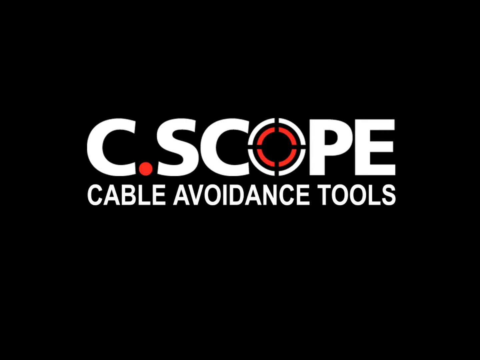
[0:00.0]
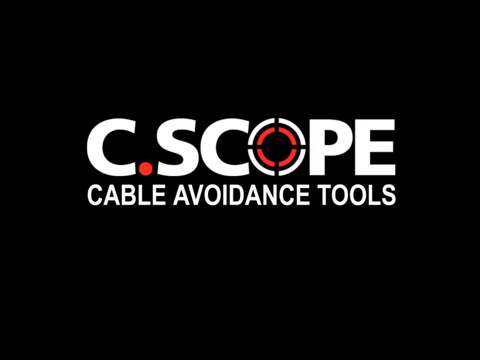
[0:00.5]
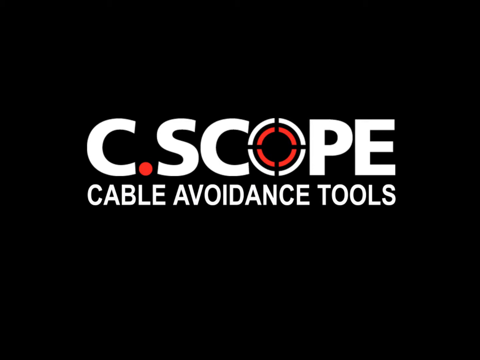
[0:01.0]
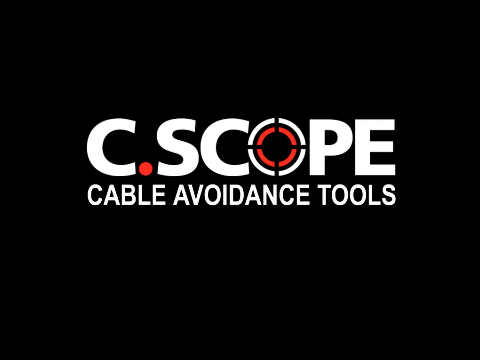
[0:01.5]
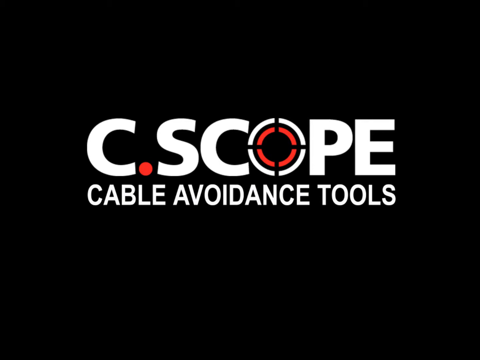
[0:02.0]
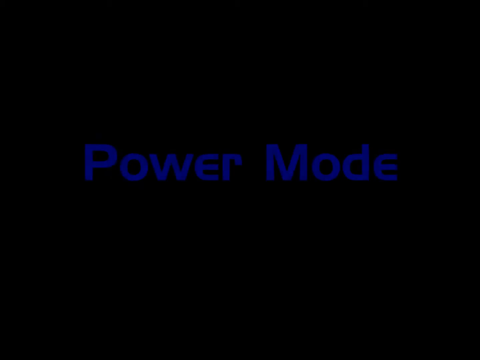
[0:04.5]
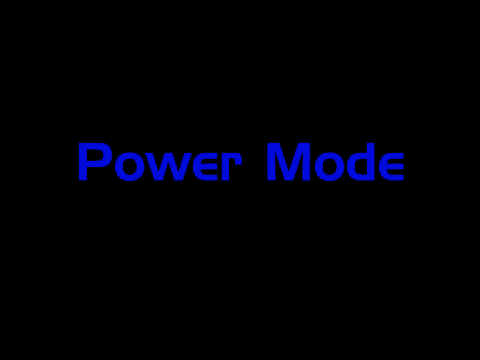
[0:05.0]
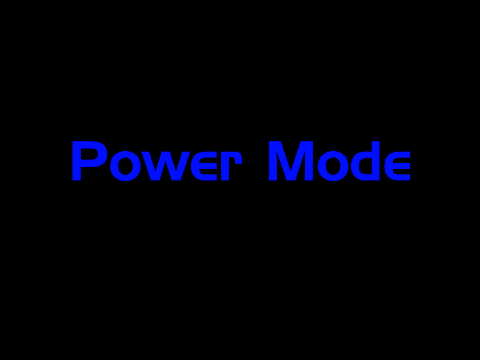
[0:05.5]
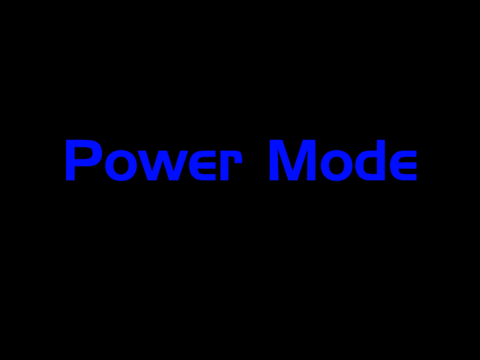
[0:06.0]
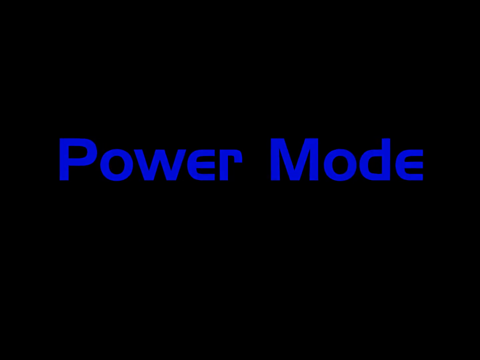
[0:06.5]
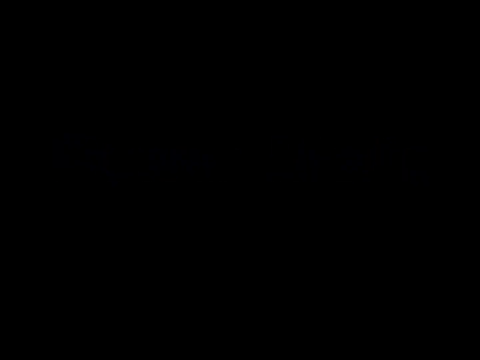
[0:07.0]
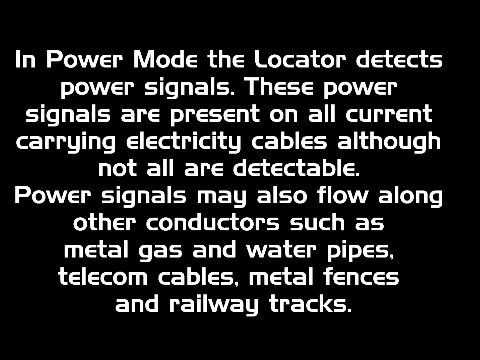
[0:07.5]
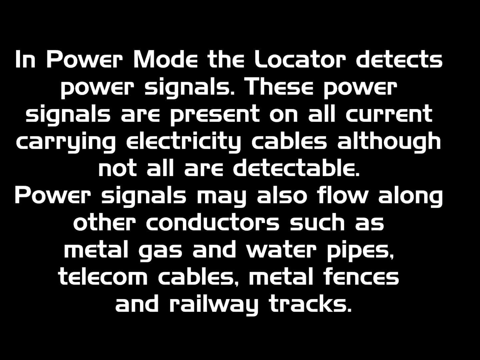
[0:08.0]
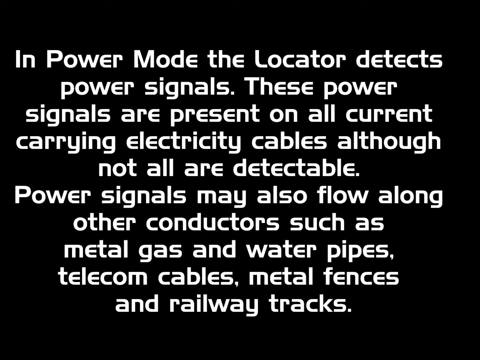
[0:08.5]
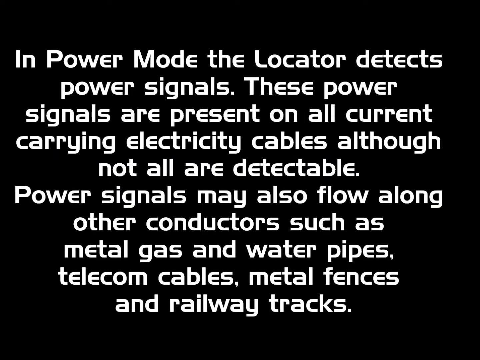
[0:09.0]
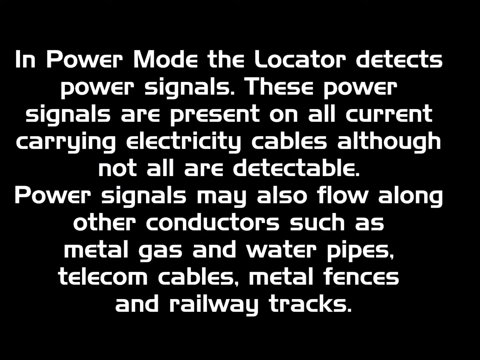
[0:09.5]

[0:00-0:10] On a black background, white text reads "C scope cable avoidance tools." Next, "power mode" appears in blue. Text then reads: "in power mode, the locator detects power signals. These power signals are present on all current carrying electricity cables, although not all are detectable. Power signals may also flow along other conductors such as metal gas and water pipes, telecom cables, metal fences and railway tracks." The C scope logo then appears: the C and "scope" are white, but the middle O of "scope" looks like a telescope in red.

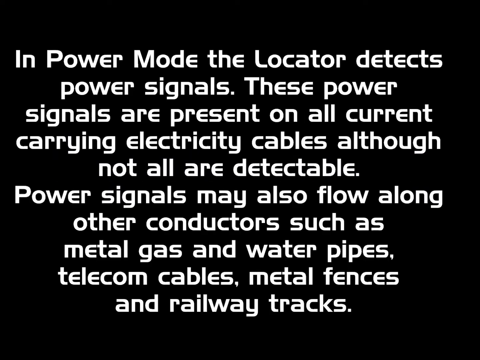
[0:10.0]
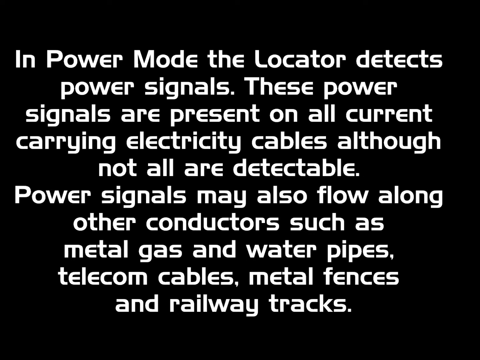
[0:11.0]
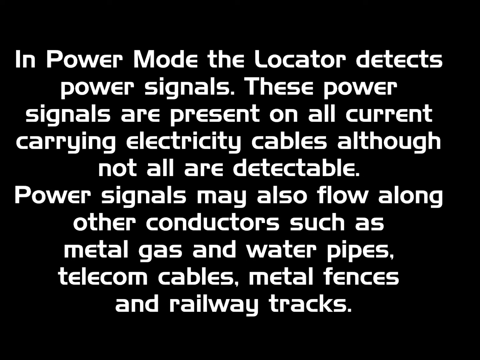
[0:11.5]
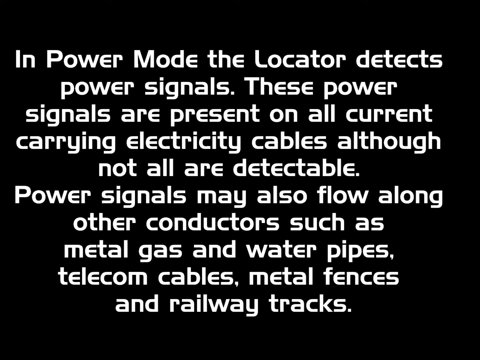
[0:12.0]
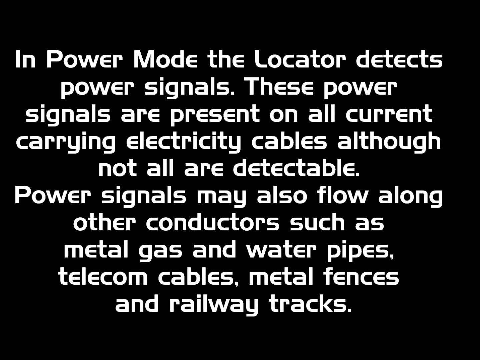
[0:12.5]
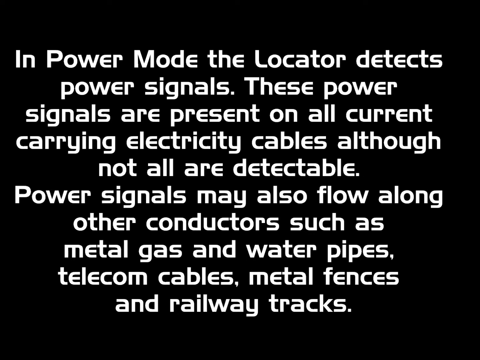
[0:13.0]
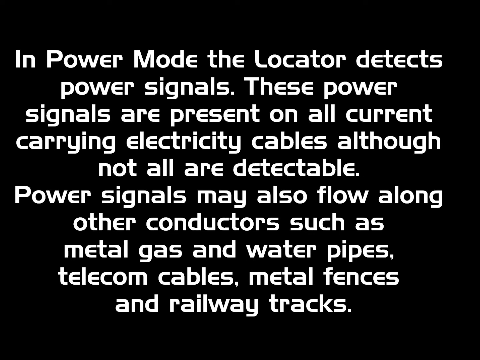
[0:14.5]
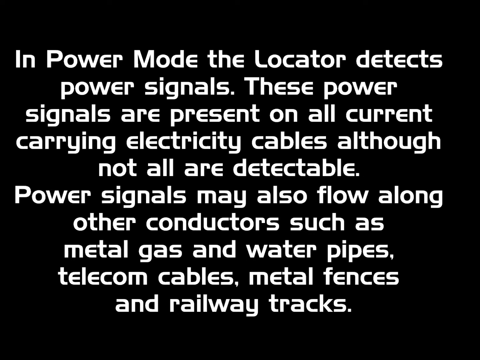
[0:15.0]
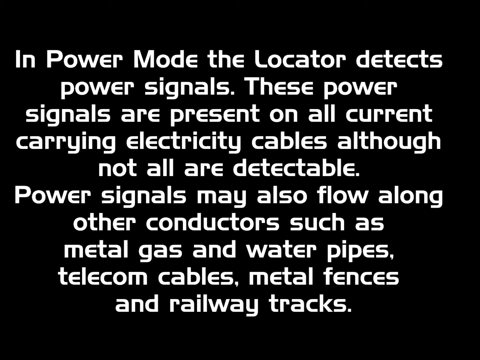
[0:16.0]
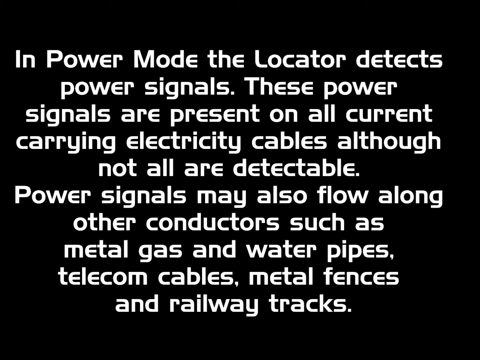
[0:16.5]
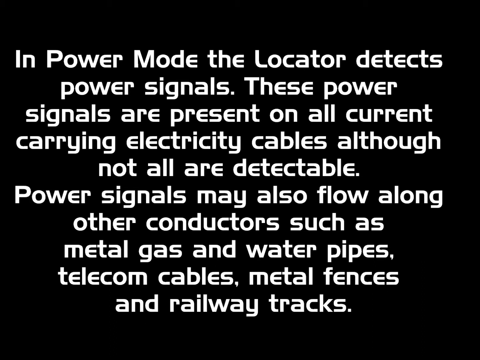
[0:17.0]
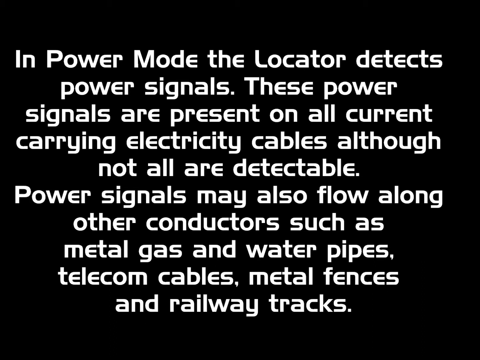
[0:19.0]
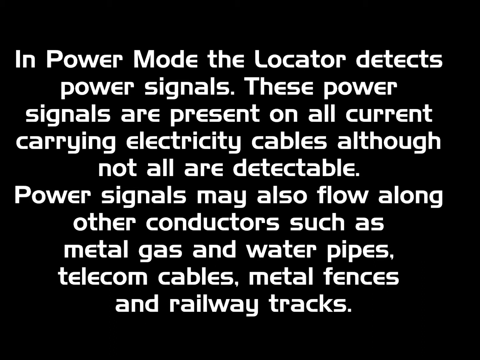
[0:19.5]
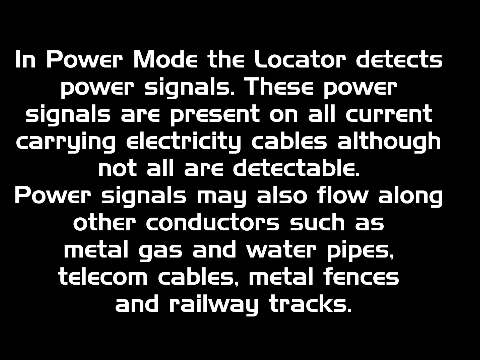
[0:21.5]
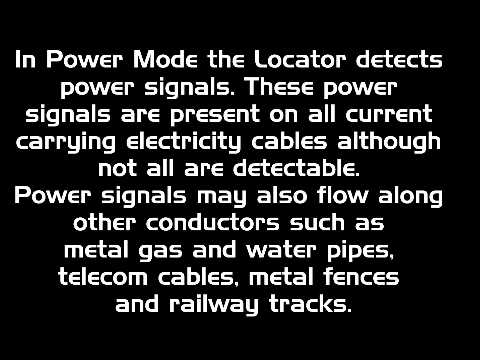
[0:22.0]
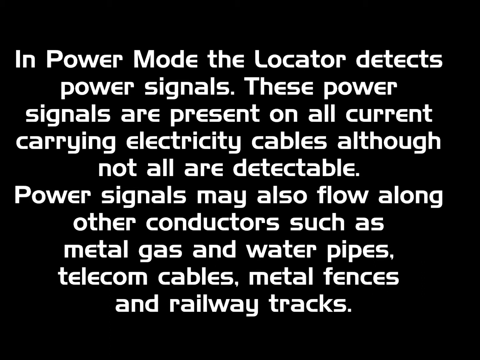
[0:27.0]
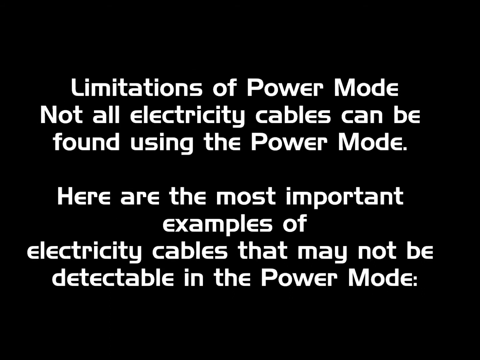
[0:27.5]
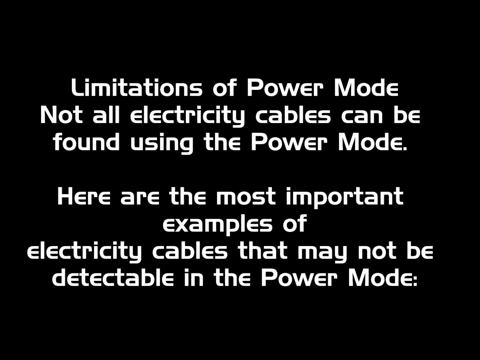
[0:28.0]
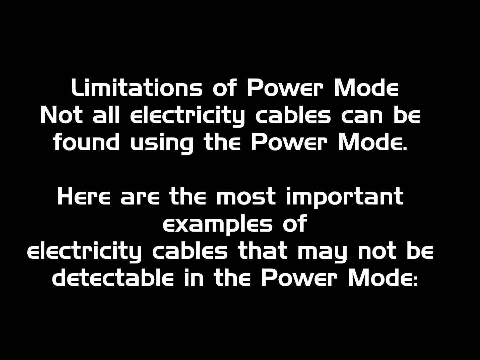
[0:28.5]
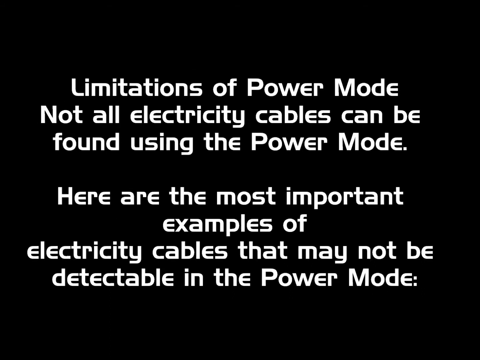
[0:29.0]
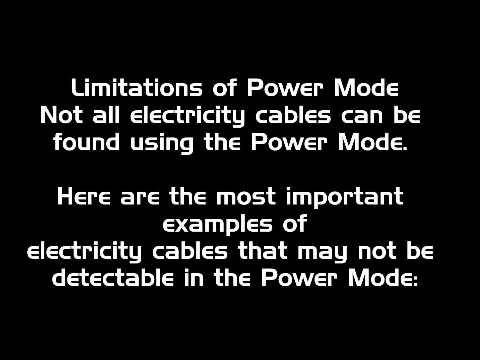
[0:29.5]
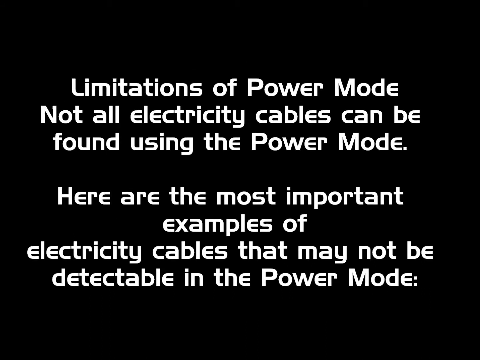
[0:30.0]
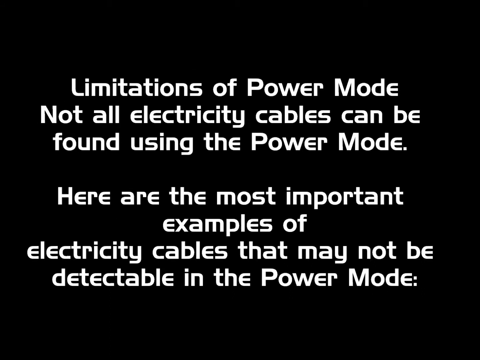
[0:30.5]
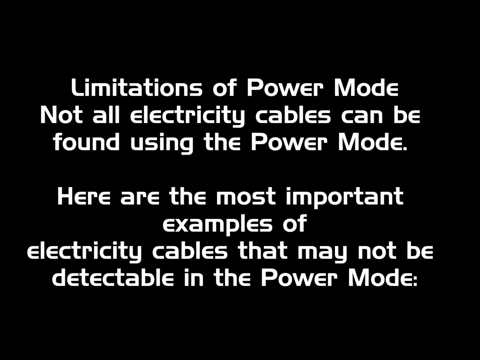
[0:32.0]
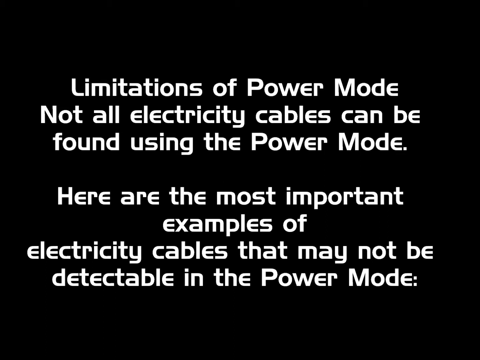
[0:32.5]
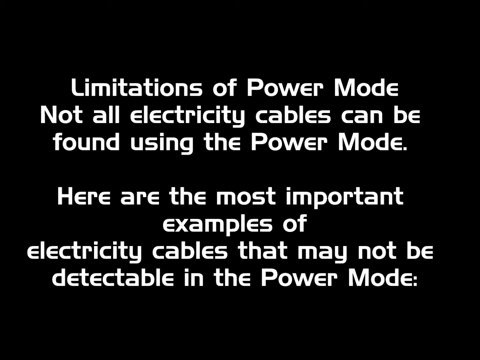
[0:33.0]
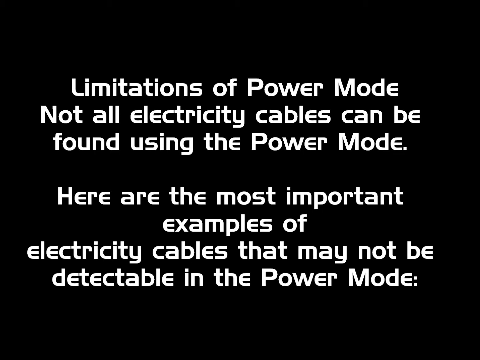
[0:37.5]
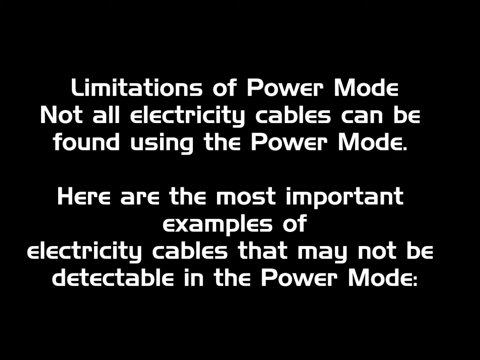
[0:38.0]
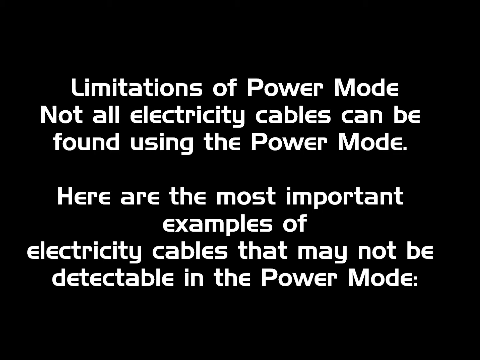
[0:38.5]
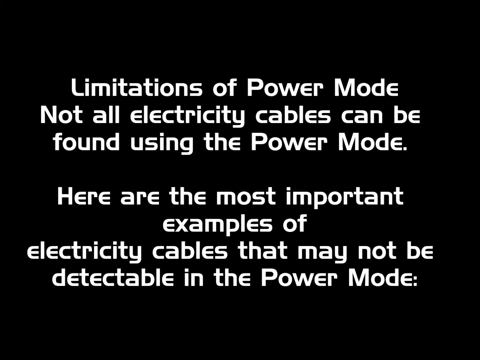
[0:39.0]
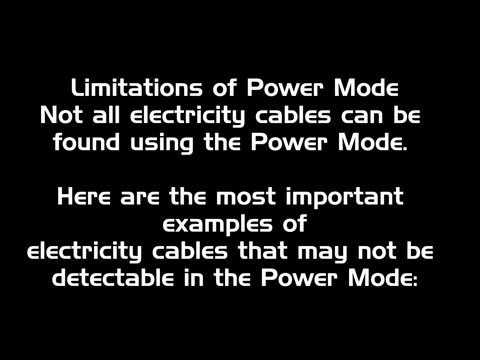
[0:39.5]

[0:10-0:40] A paragraph of text about what power mode is, mentioning railroad tracks and telecom cables, is on screen. Further on, text reads "limitations of power mode, not all electricity cables can be found using the power mode. Here are the most important examples of electricity cables that may not be detectable in the power mode" followed by a colon. The background is black and all the print is white. The video seems to fast forward a little, and the text says that street lighting is not always in the power mode.